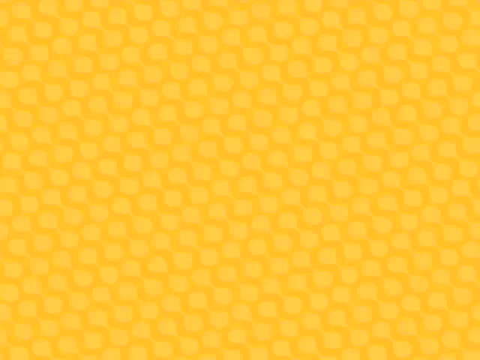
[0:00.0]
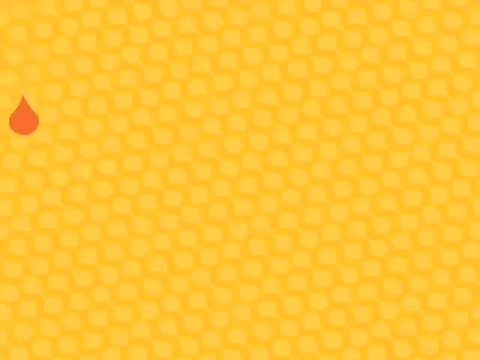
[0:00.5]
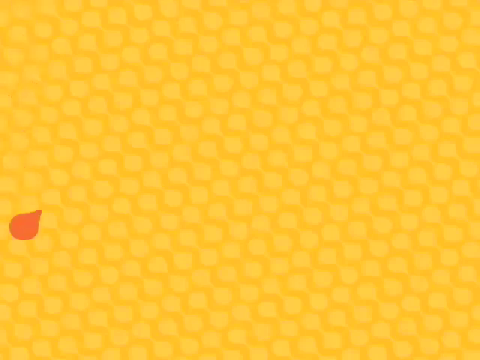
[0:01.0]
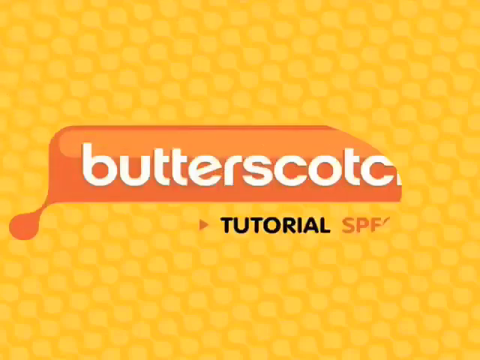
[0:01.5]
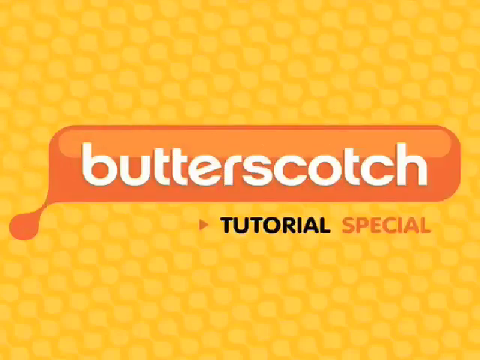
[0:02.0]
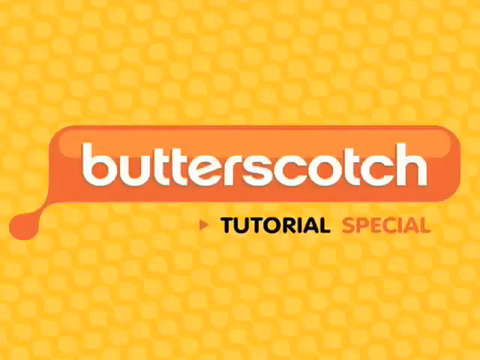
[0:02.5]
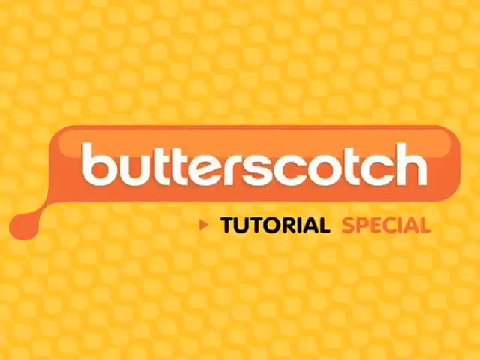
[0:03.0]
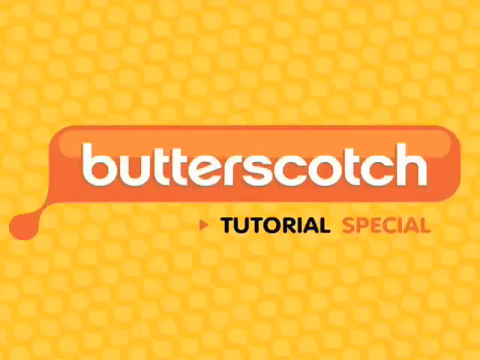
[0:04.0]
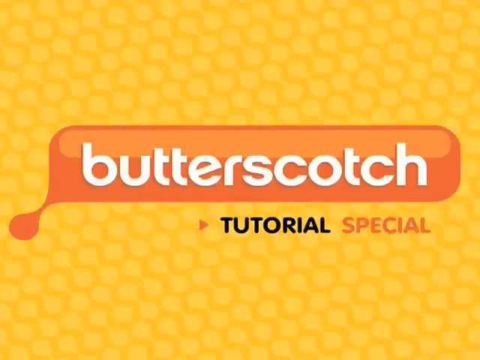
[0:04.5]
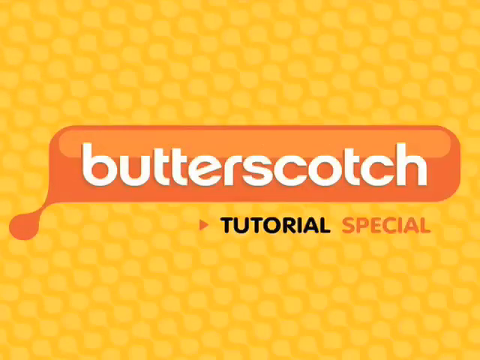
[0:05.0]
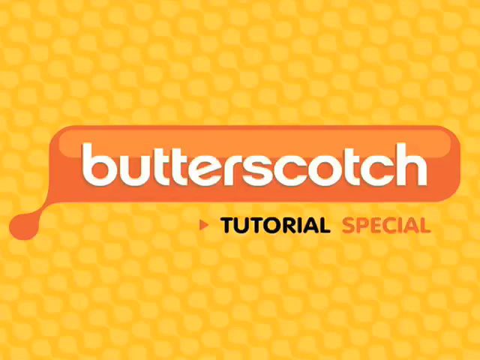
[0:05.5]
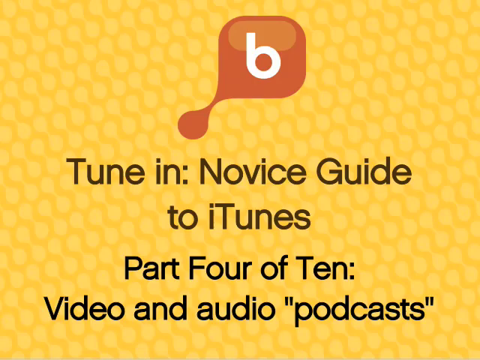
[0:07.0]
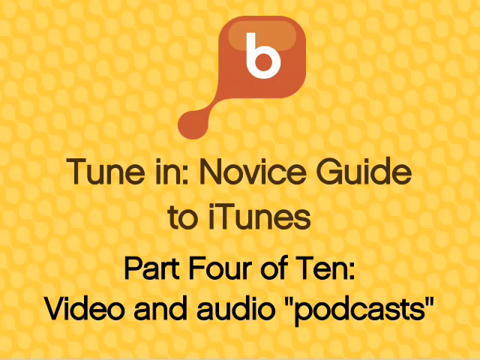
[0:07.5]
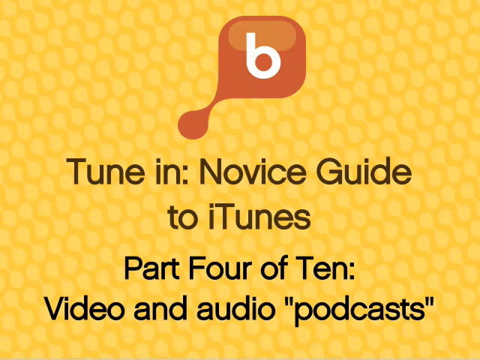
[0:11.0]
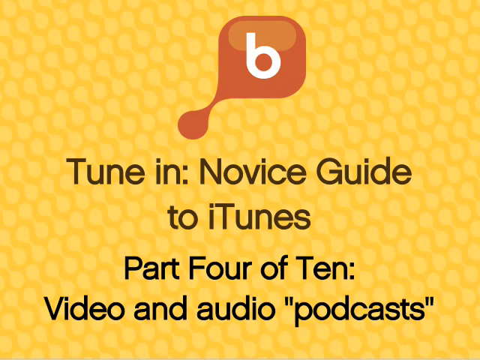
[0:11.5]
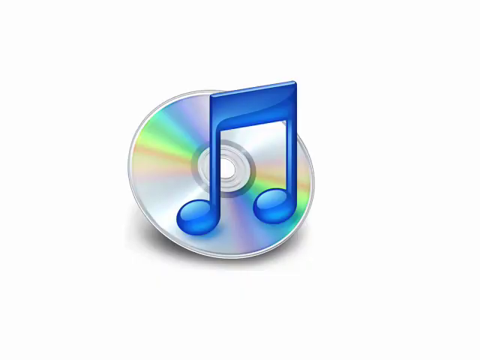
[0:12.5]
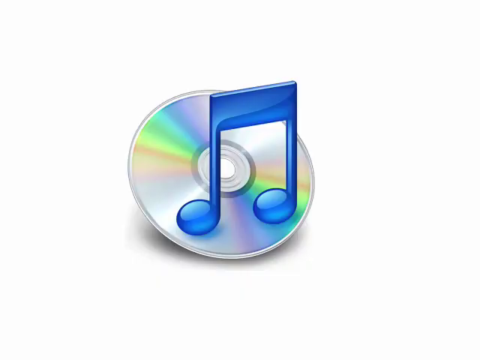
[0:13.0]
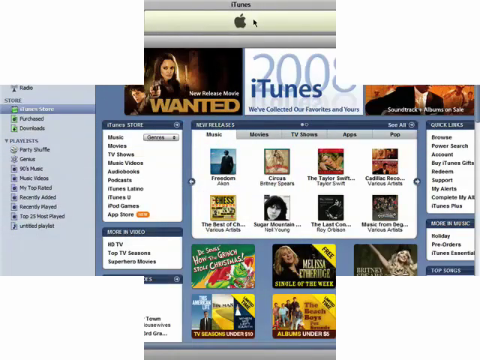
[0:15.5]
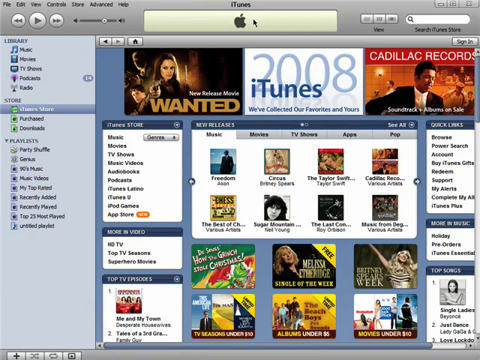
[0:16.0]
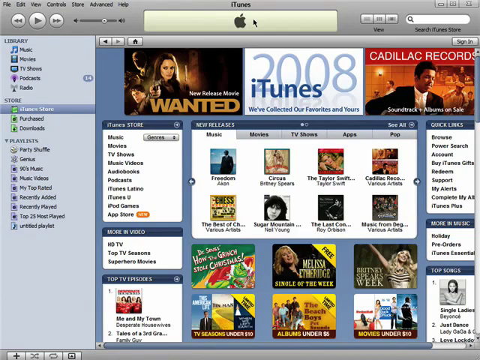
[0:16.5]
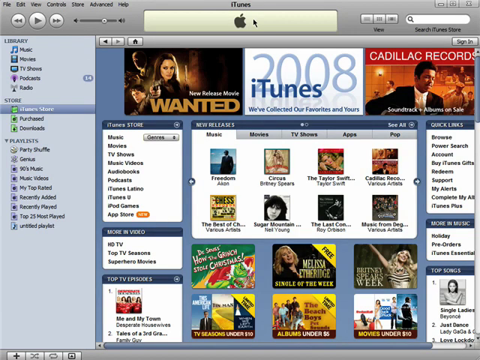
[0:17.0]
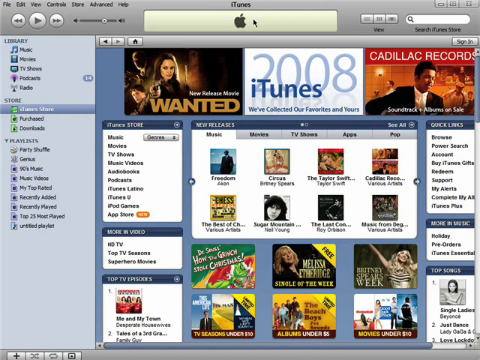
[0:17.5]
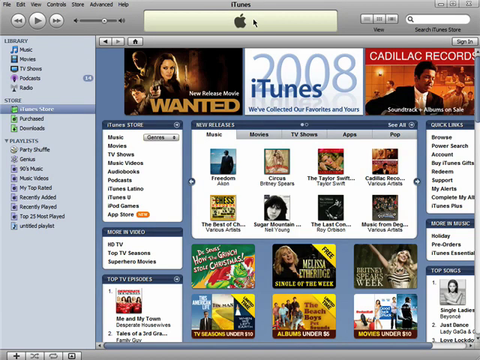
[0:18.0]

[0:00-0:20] The video opens on an orange background that has dots, or perhaps bumps, on it; it almost looks like a close-up view of an orange. An orange banner pops up with "Butterscotch" written in white letters, and below it "Tutorial Special" appears in black and orange. Below a logo with a B on it, text reads "Tune In, Novice Guide to iTunes, Part 4 of 10, Video and Audio Podcast." Next, a cartoonish graphic of a CD with a music note on top of it appears on a white background. Then what appears to be the iTunes home page is shown, with "iTunes 2008" in the middle and what look like several different movies displayed. At the top are a poster for the movie Wanted and another for the movie Cadillac Records.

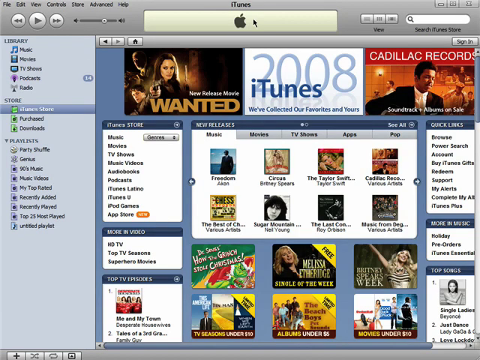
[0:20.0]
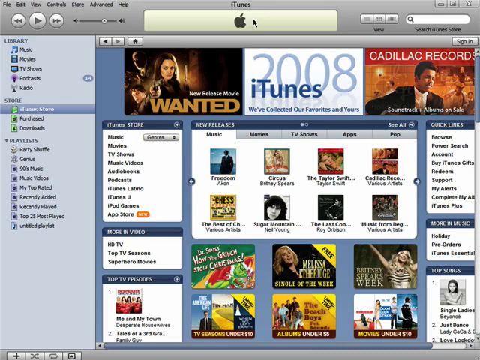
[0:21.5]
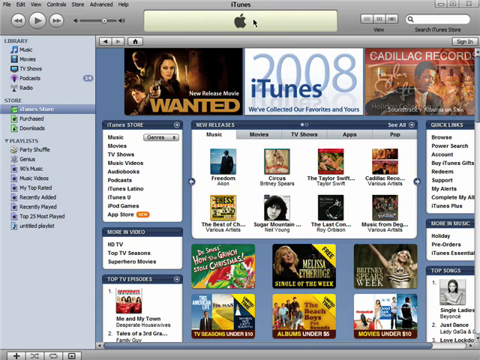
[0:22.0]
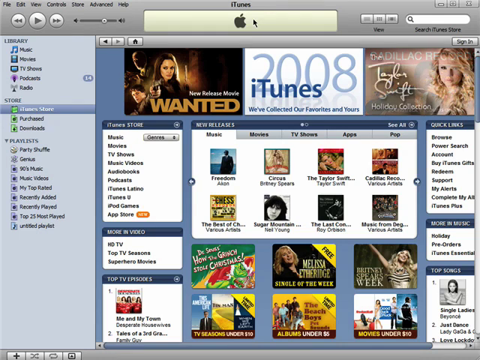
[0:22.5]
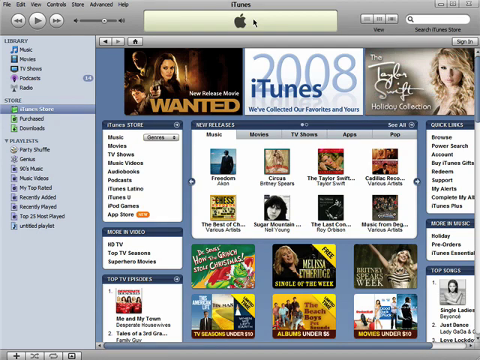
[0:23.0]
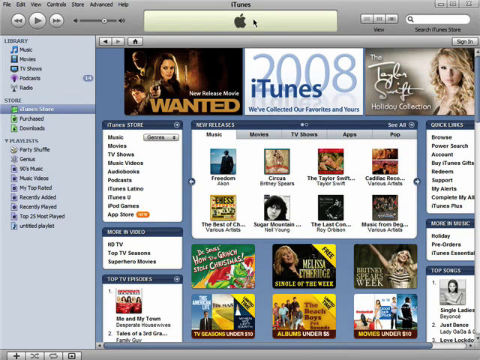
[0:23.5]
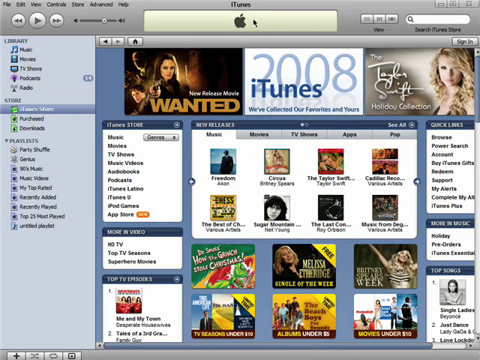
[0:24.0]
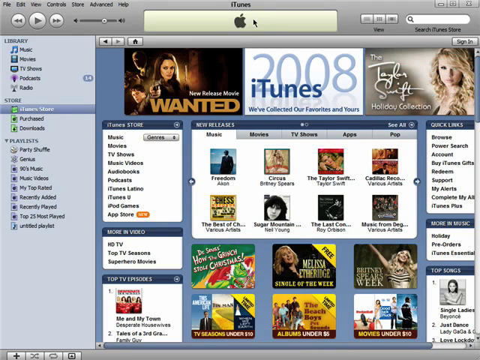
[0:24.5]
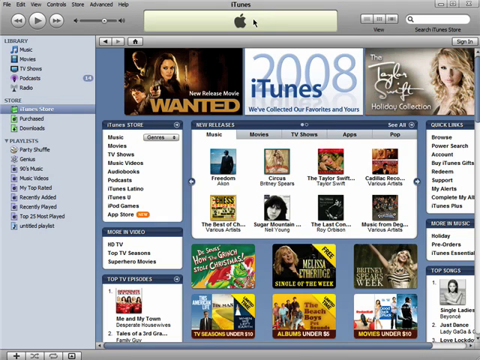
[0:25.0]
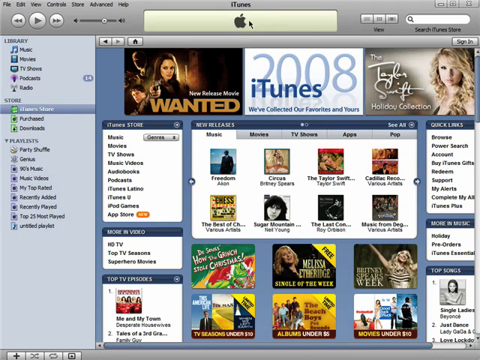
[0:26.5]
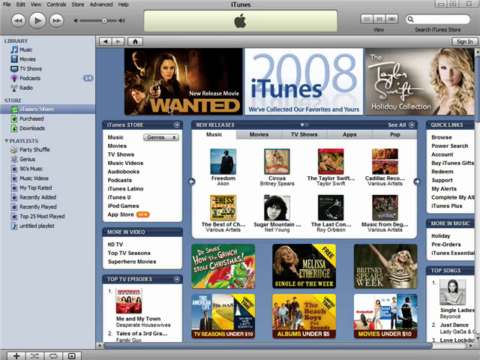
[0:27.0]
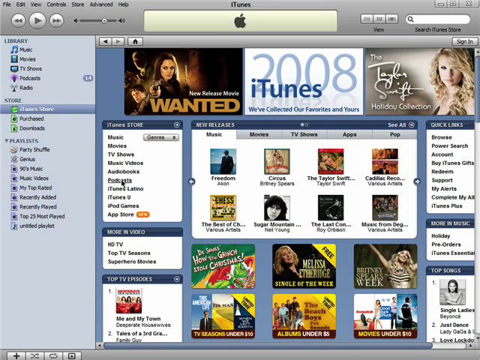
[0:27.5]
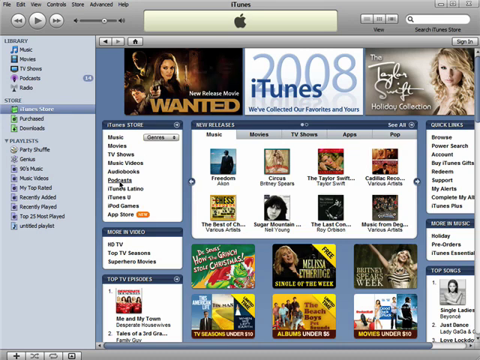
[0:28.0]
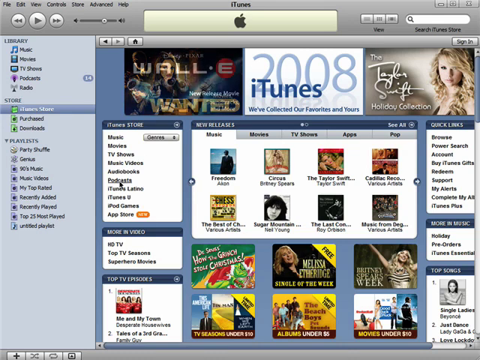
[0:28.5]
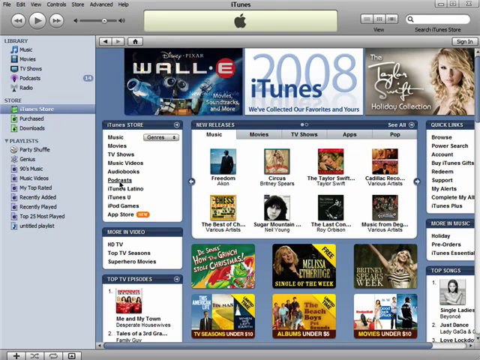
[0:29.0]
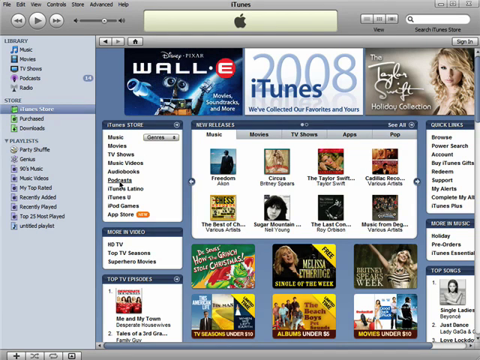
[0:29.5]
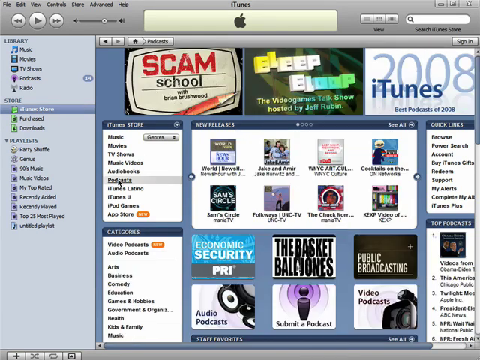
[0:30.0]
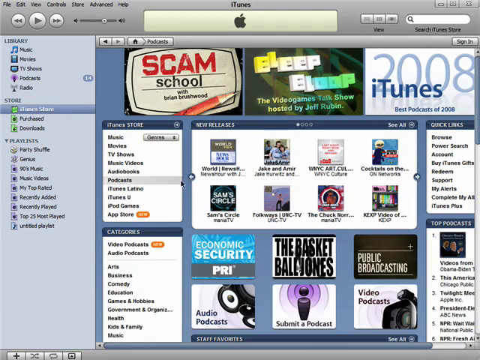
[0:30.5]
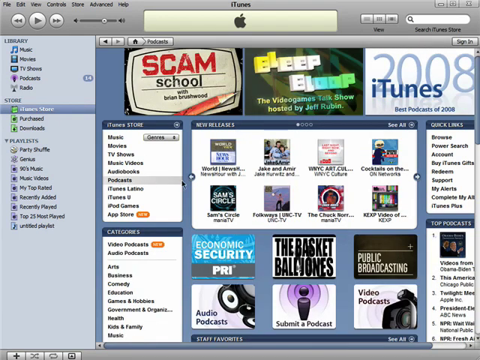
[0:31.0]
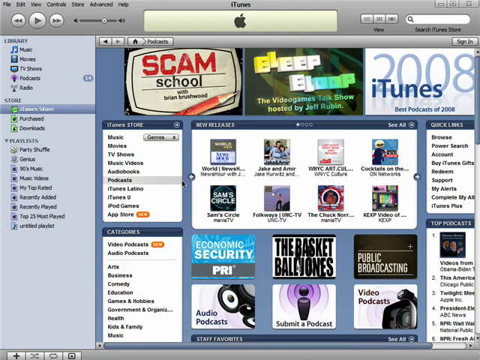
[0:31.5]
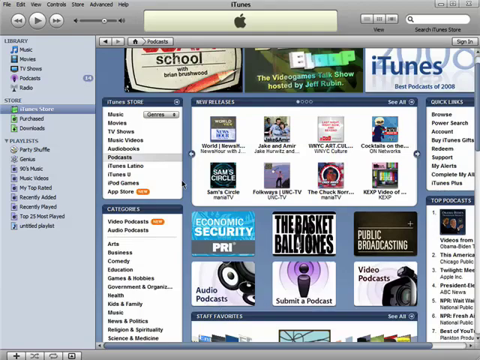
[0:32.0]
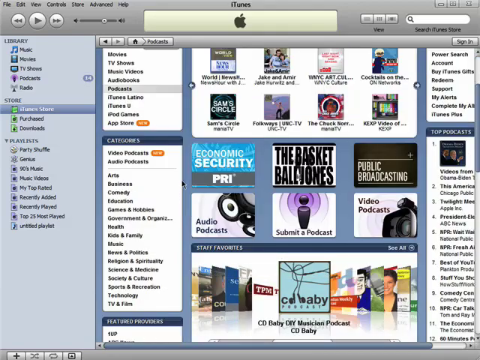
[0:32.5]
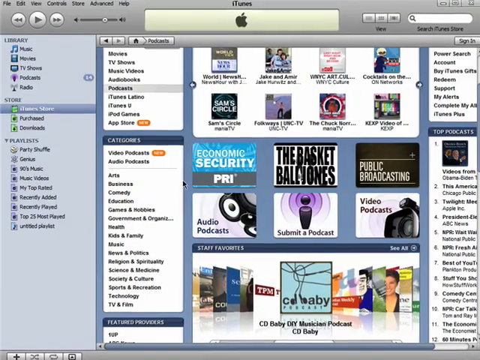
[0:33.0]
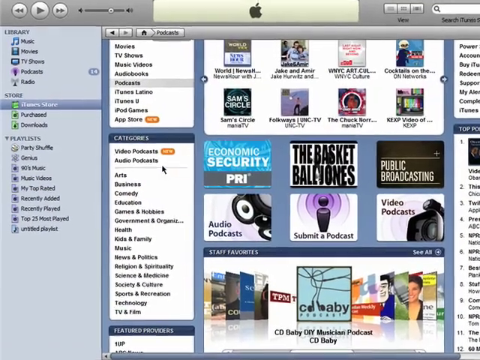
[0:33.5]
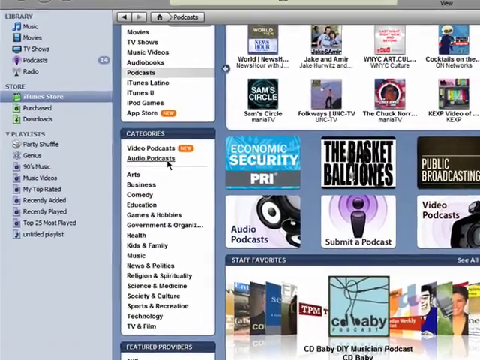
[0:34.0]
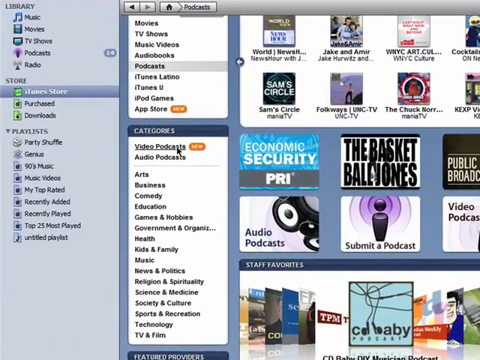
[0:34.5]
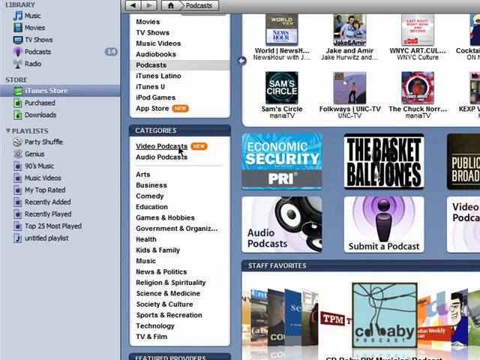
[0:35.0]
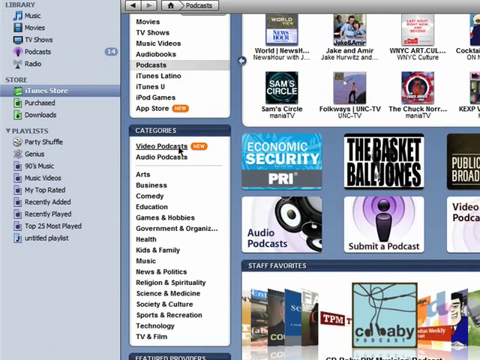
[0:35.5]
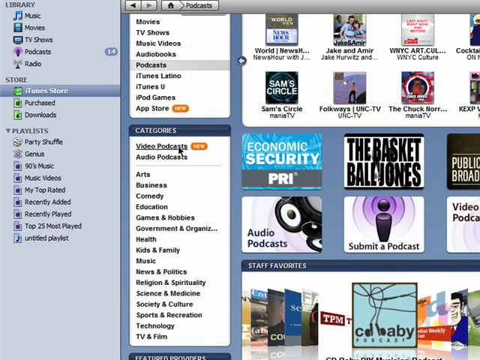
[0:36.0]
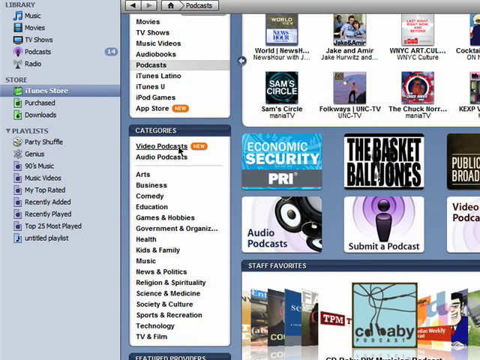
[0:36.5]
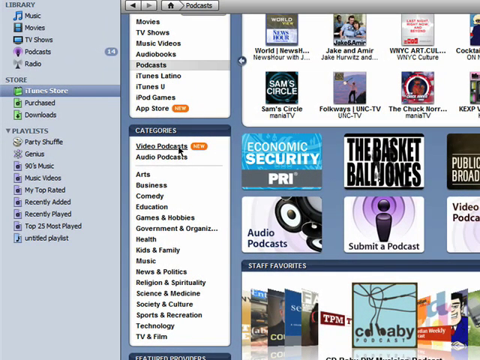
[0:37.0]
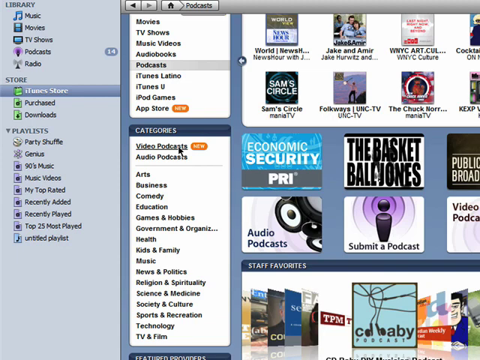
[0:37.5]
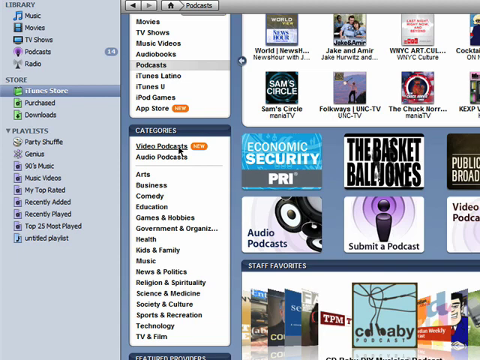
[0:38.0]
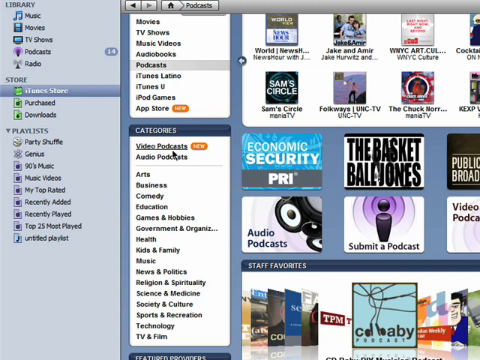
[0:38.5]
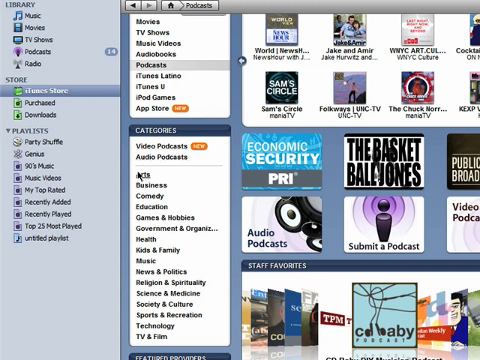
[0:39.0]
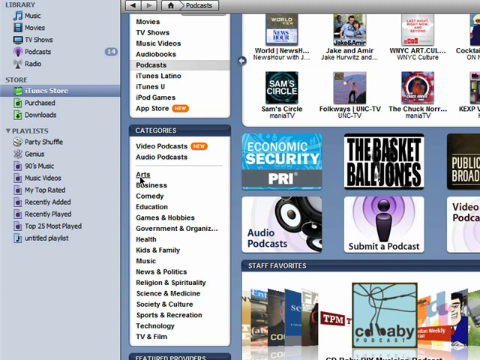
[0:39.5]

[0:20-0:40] The home page reading "iTunes 2008" is still on screen; it looks like an older-style webpage. On the side is a menu with various library and menu options, and on the right are several windows and sections, each containing different options. The banner at the top has changed from the Cadillac Records poster to an advertisement for the Taylor Swift Holiday Collection. The person scrolls down, revealing various podcast options, including logos for Economy, Security, PRI and Audio Podcast. There appears to be text to submit a podcast. Public Broadcasting is shown, and below it a logo for Video Podcast.